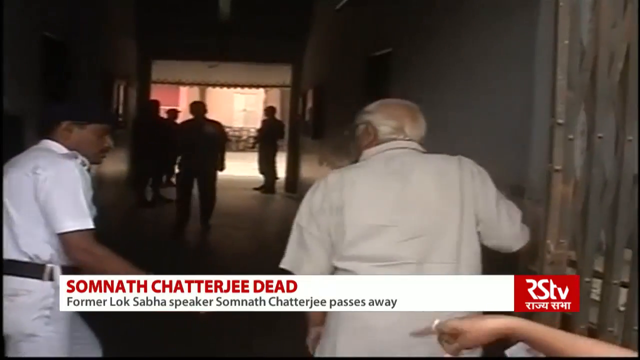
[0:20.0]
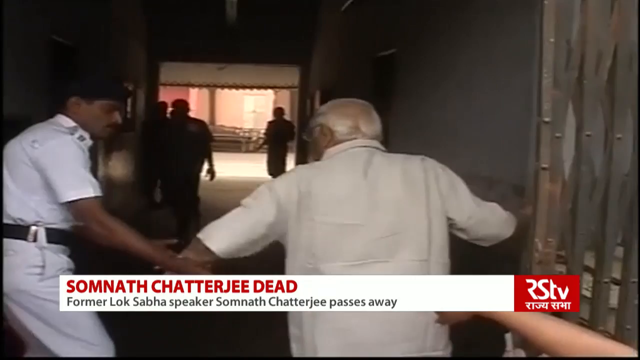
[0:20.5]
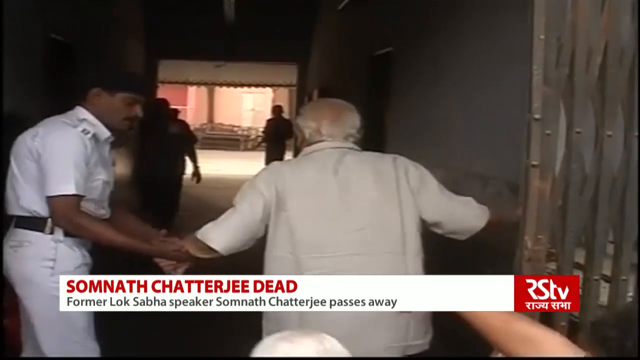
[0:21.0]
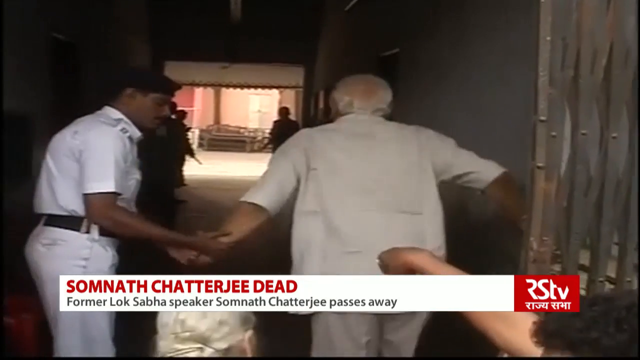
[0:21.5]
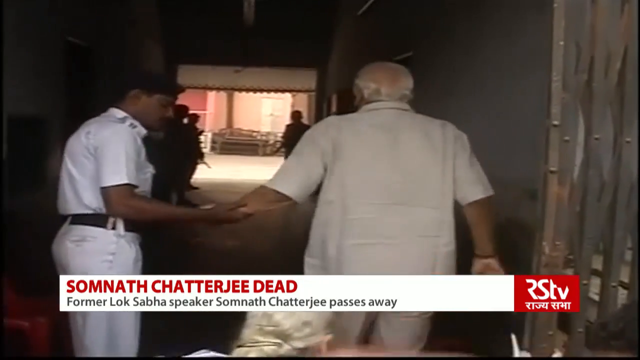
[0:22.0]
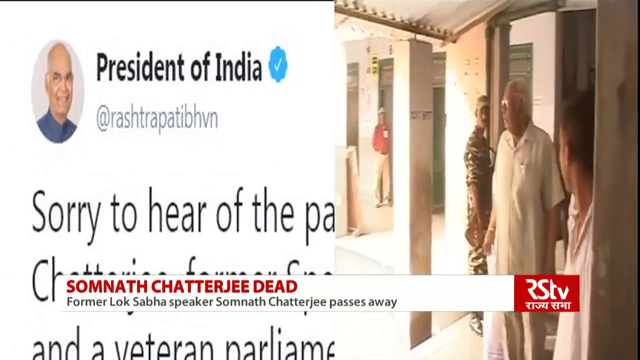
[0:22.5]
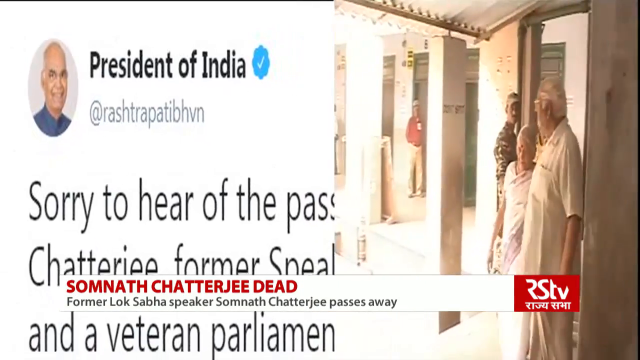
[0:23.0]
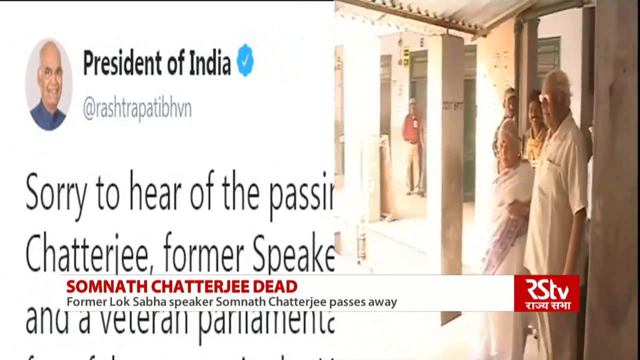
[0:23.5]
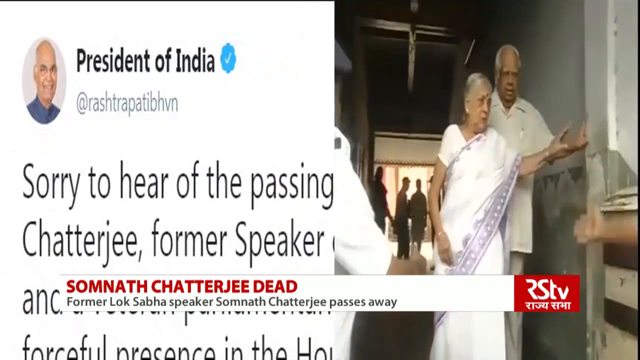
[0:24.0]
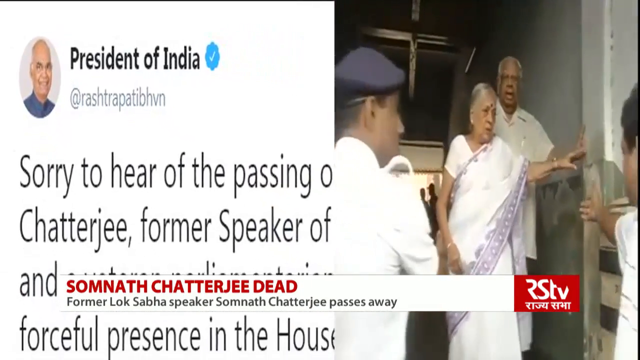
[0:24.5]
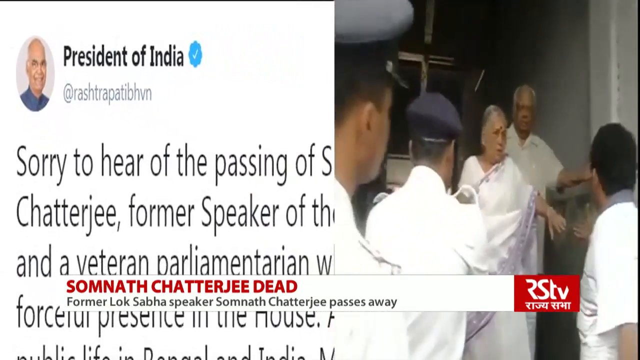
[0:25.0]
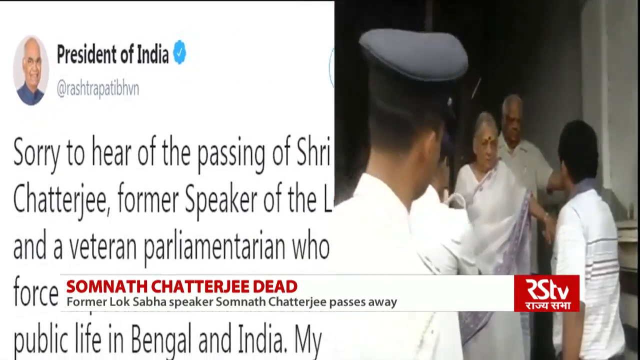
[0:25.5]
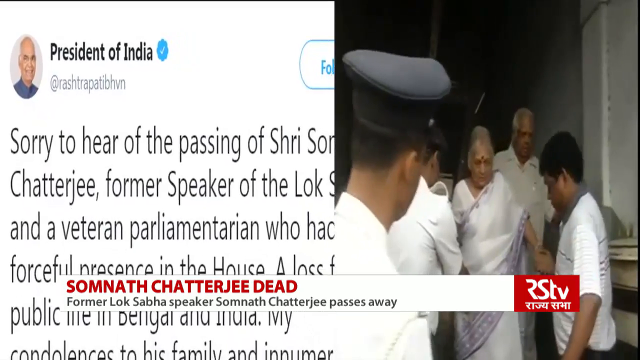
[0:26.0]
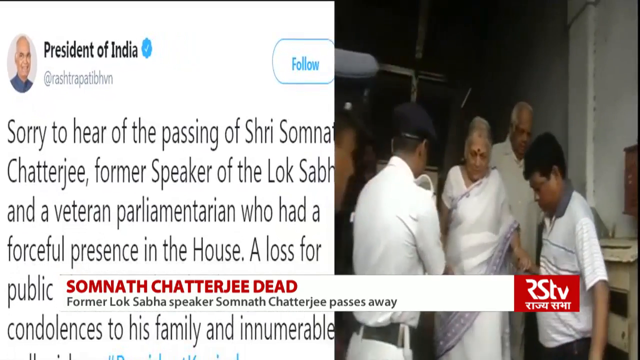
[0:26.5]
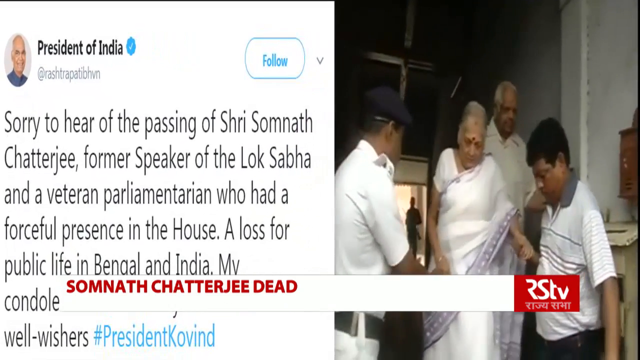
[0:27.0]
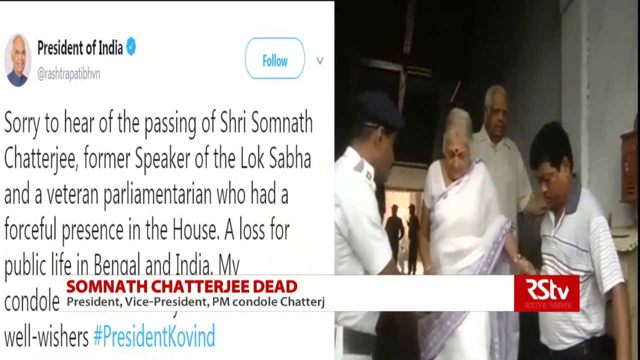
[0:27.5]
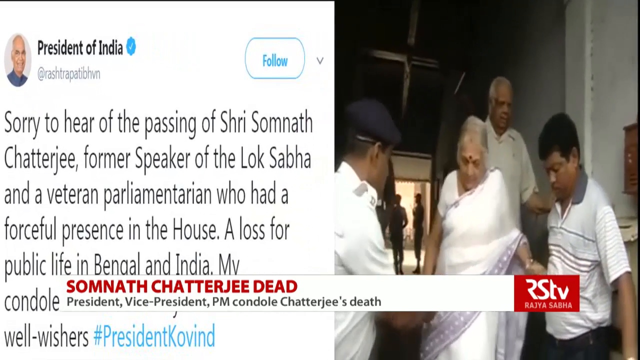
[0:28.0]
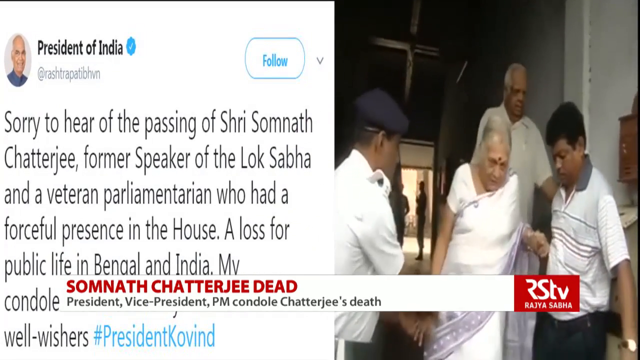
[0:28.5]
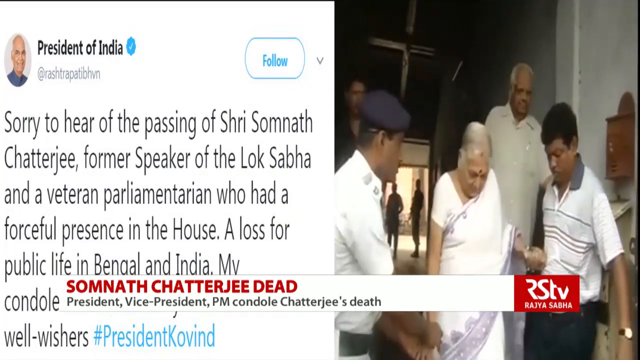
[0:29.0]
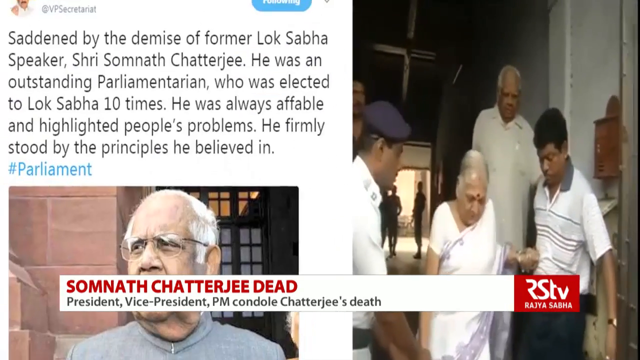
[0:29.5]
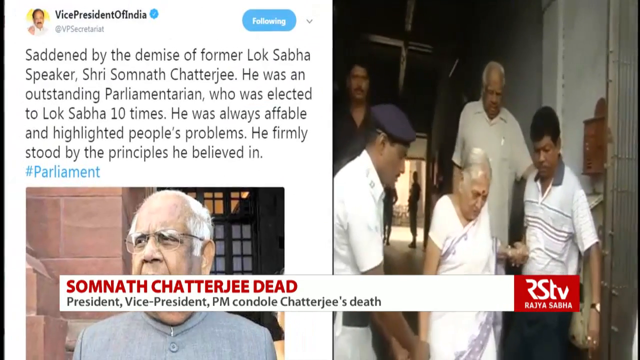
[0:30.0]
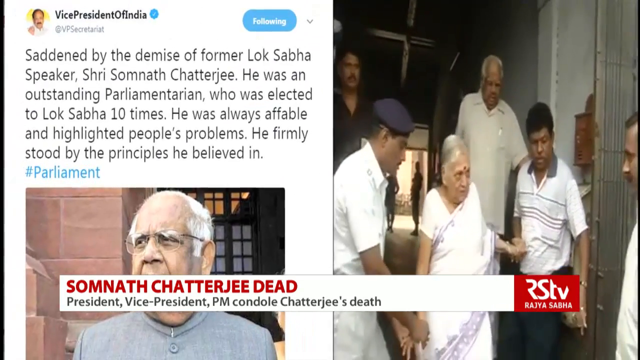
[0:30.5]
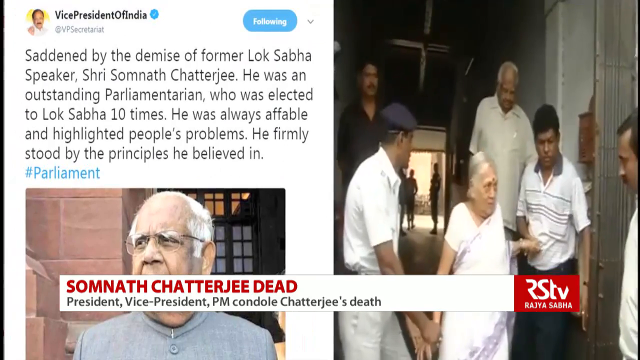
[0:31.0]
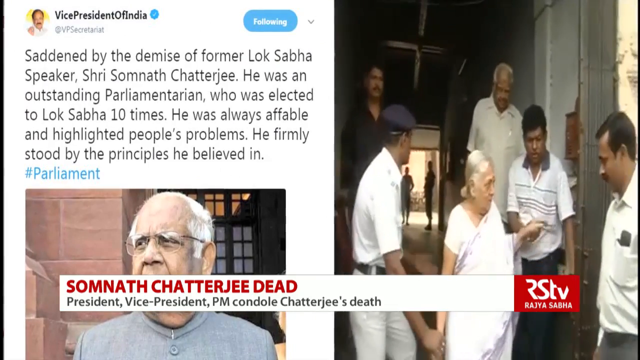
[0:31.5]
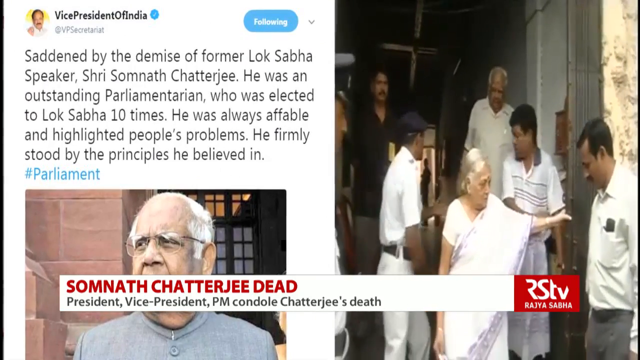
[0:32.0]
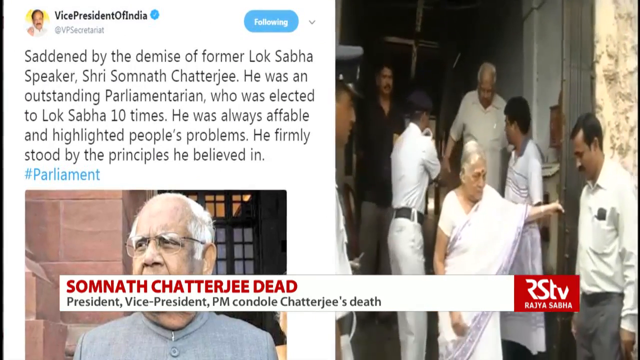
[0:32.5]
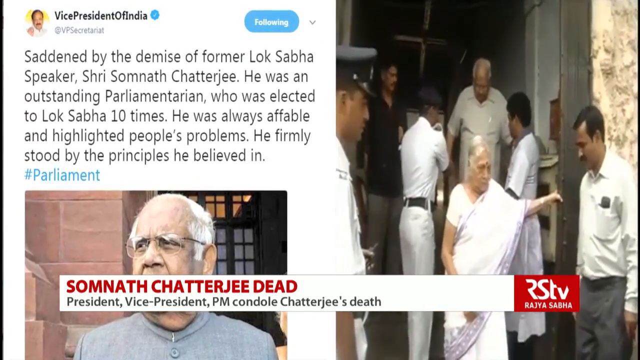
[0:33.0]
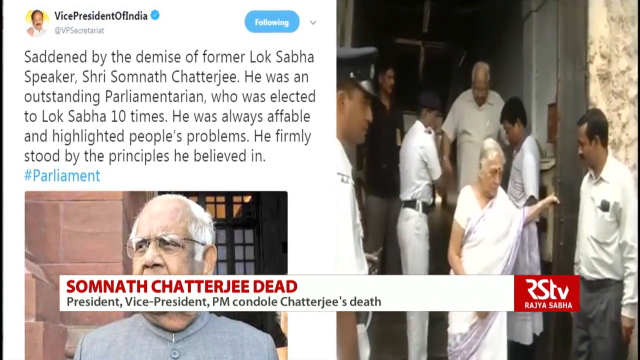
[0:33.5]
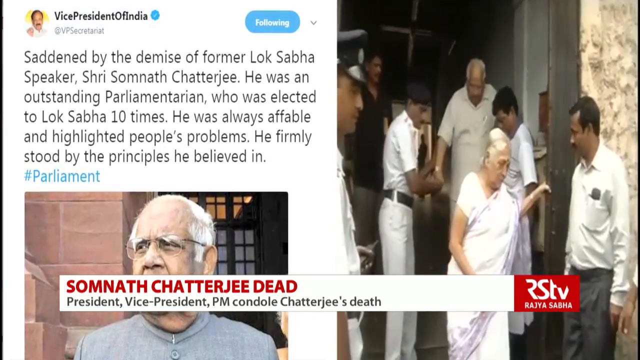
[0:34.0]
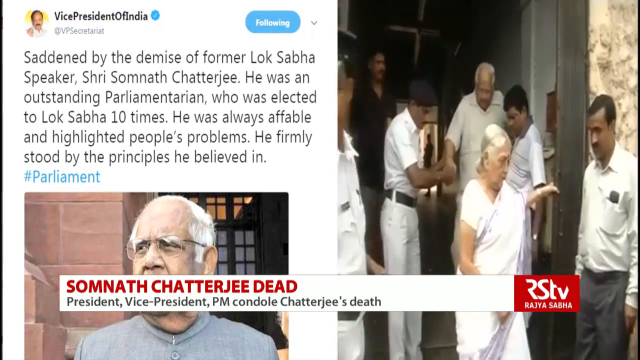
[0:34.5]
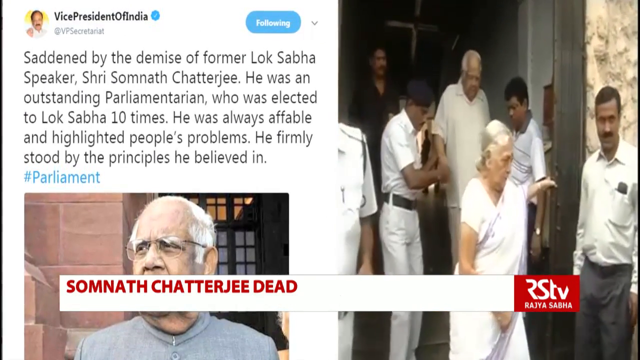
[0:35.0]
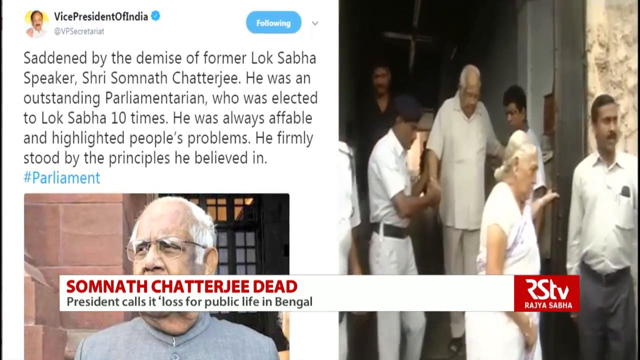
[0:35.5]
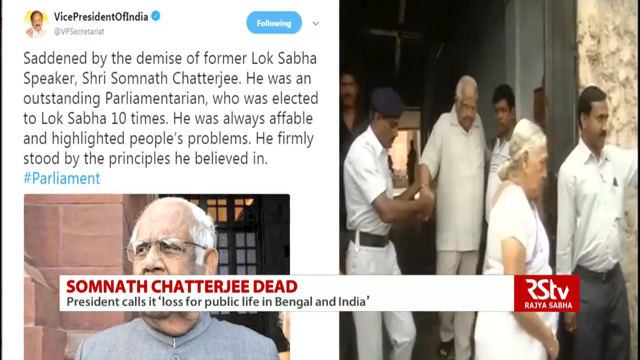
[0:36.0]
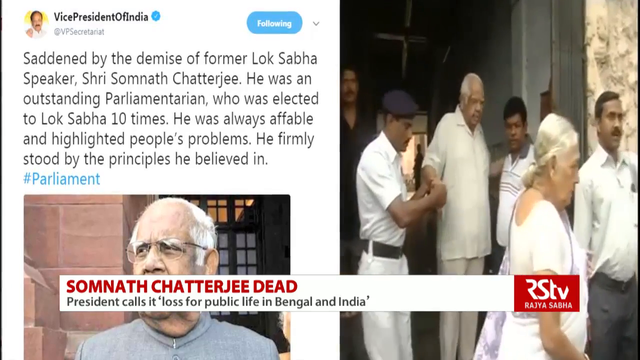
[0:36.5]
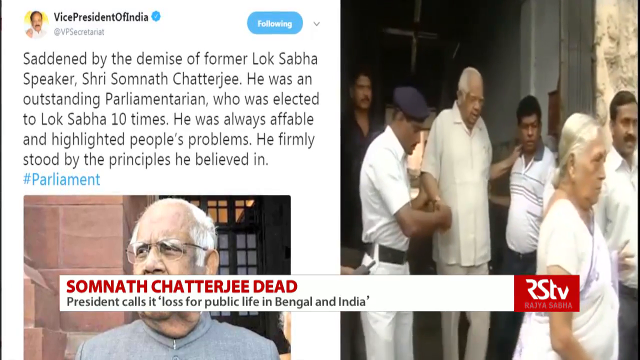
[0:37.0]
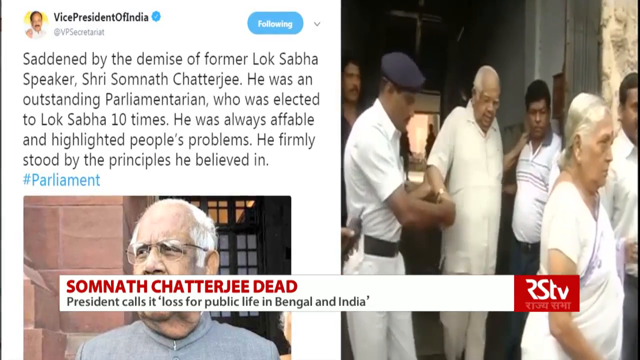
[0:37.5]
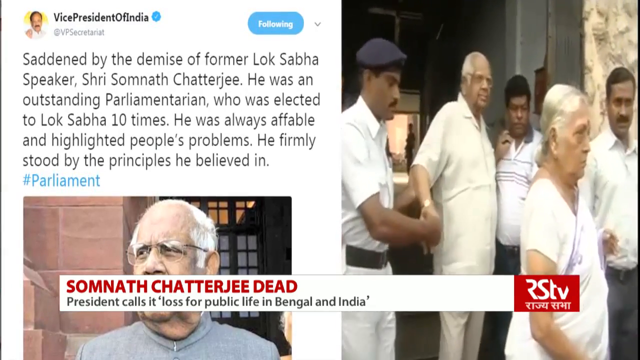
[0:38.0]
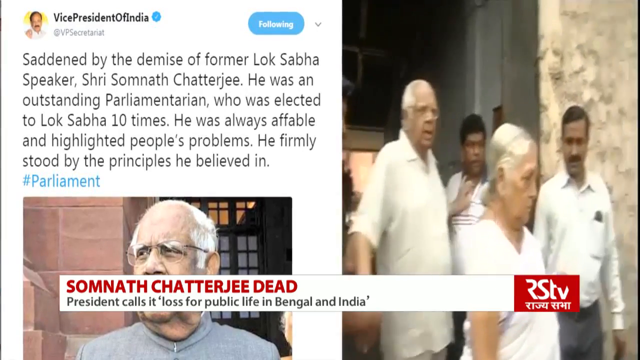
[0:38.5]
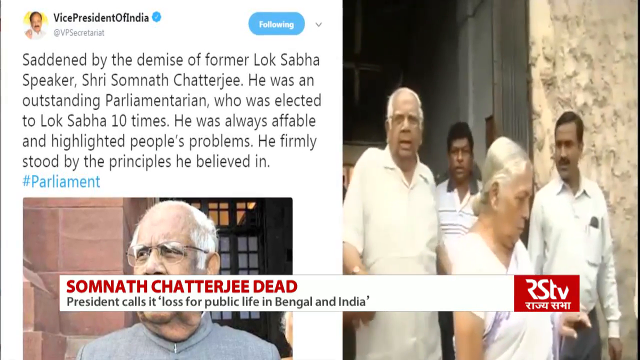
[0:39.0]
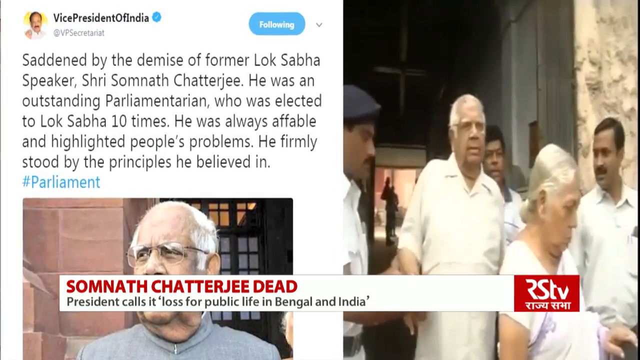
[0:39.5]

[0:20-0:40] The older man with white, balding hair and a white shirt walks through a gate toward a hallway area where people are on the other side. A man in a white shirt walks to his left. The bottom of the screen says "Somnath Chaturji dead" and "Former Lok Sabha speaker, Somnath Chaturbiji passes away." The footage appears to be of the man who has died. The video then cuts to a tweet from the President of India that says "sorry to hear of the passing of Sri Somnath Chaturji, former speaker of the Lok Sabha and a veteran parliamentarian who had a forceful presence in the house, a loss for public life in Bengal and India, my condolences." It then cuts to another tweet, by the Vice President of India.